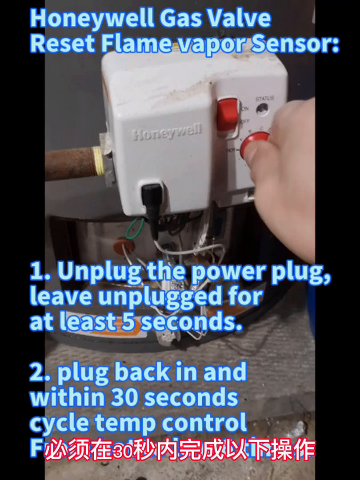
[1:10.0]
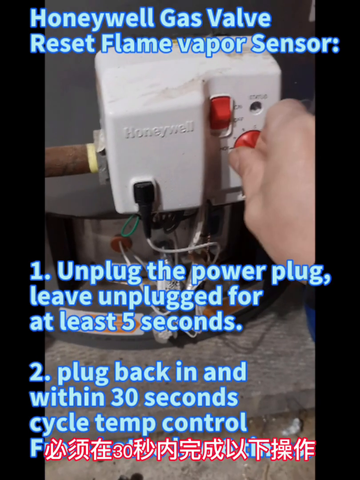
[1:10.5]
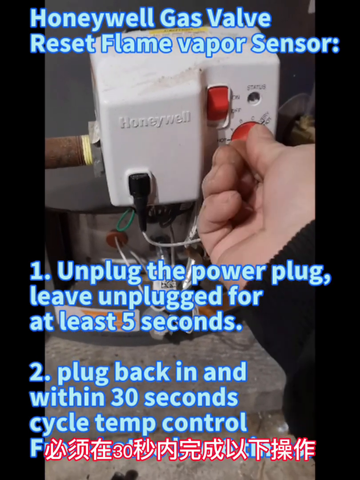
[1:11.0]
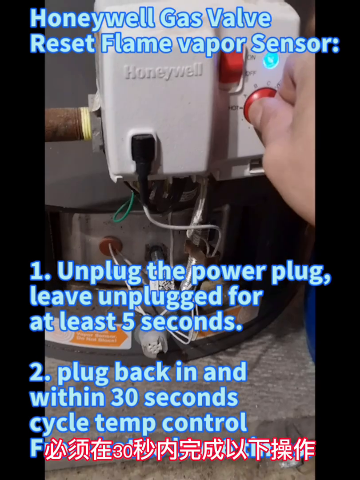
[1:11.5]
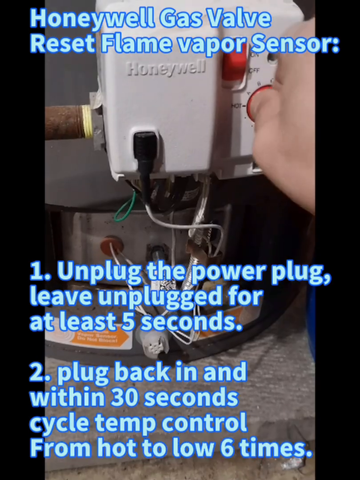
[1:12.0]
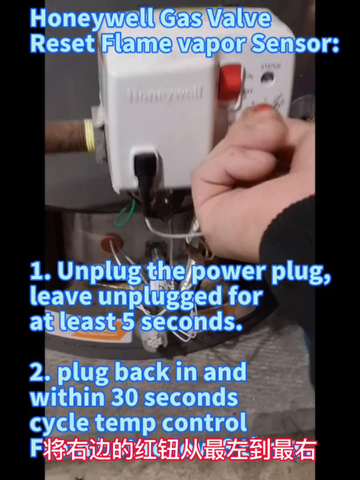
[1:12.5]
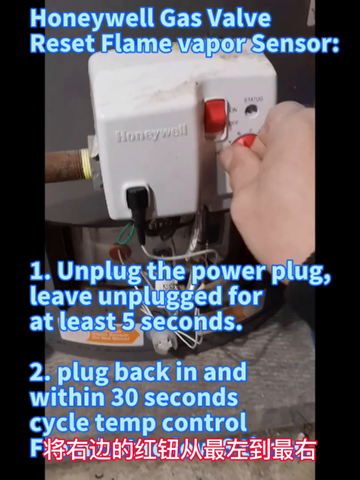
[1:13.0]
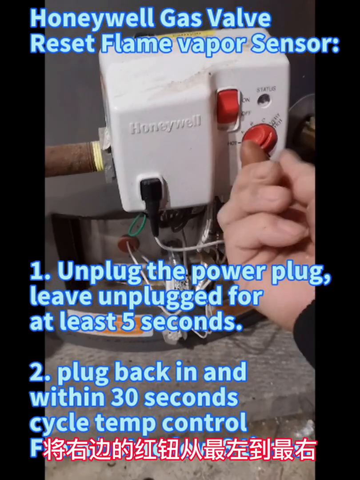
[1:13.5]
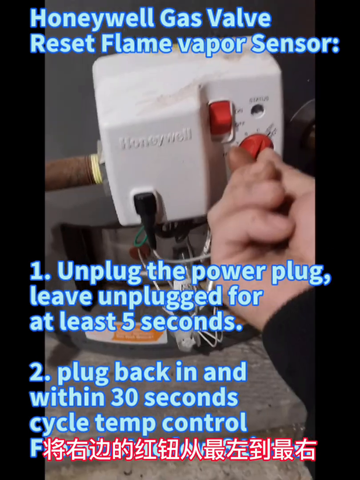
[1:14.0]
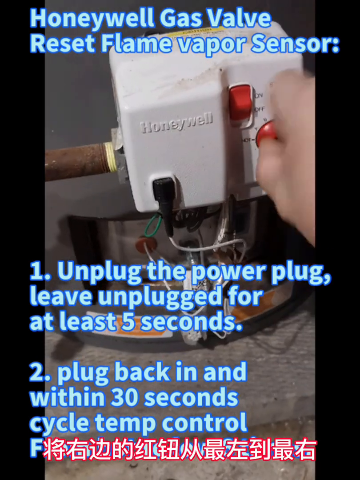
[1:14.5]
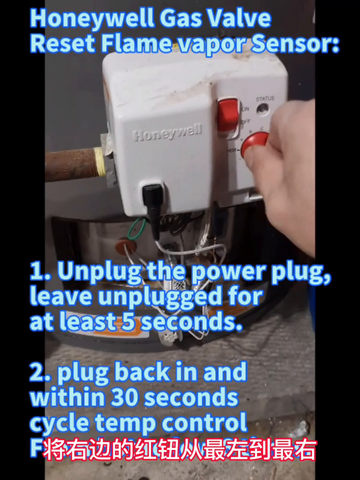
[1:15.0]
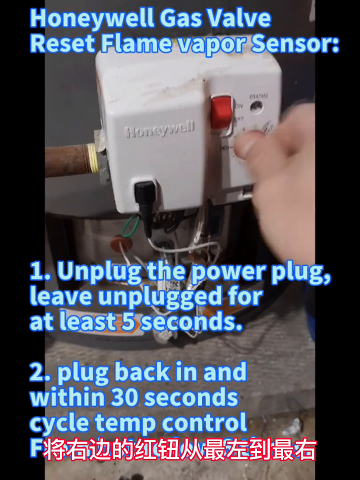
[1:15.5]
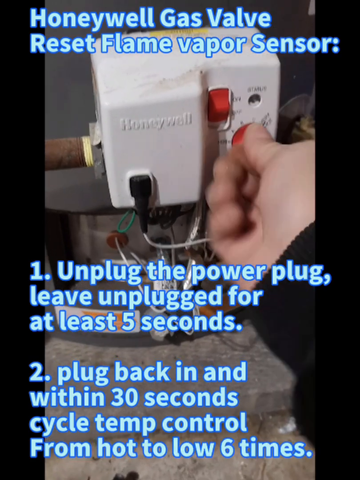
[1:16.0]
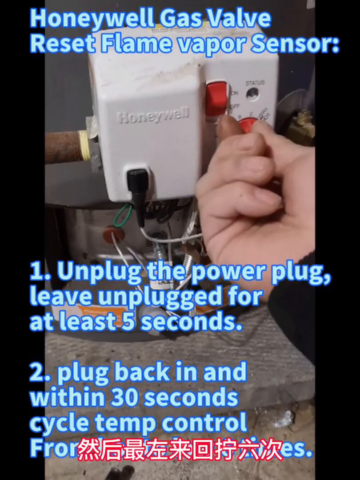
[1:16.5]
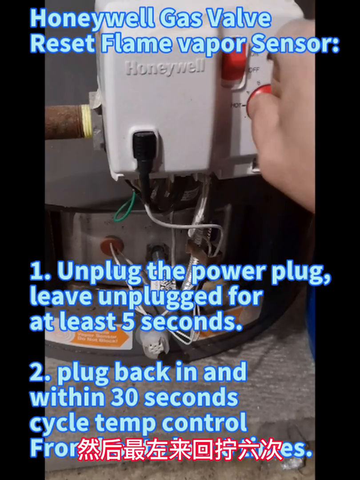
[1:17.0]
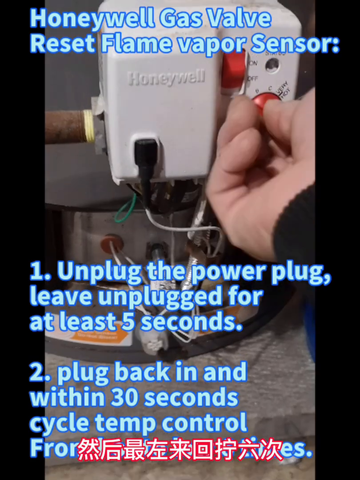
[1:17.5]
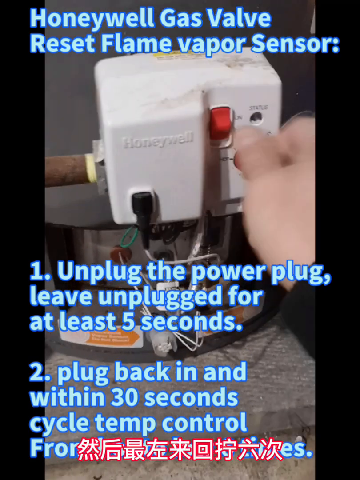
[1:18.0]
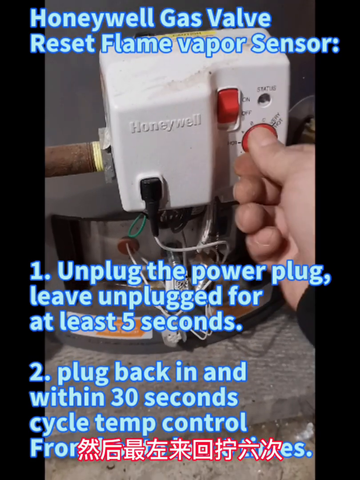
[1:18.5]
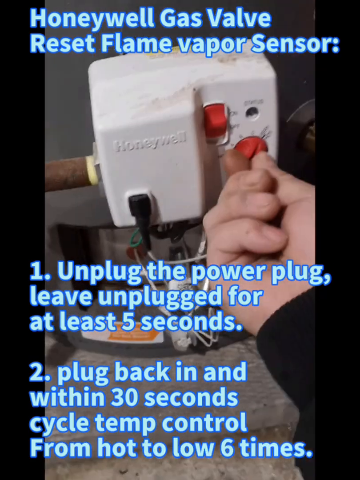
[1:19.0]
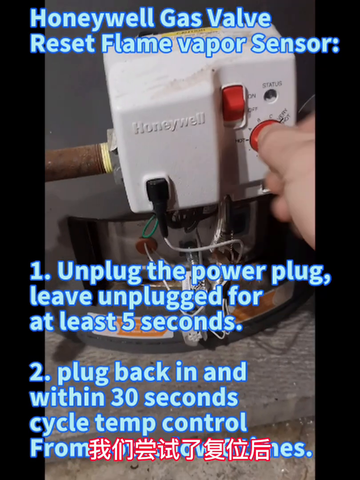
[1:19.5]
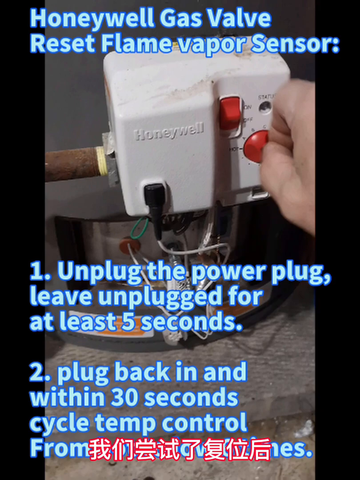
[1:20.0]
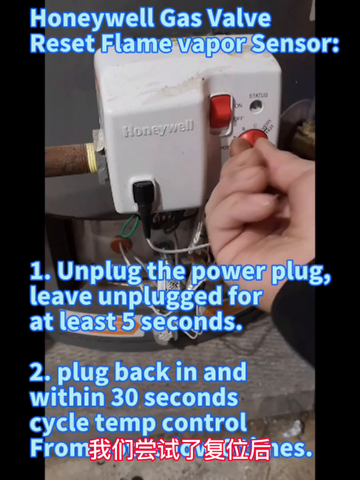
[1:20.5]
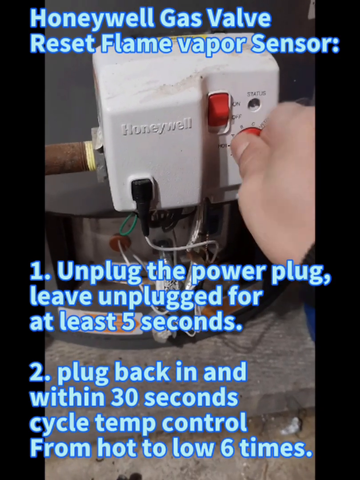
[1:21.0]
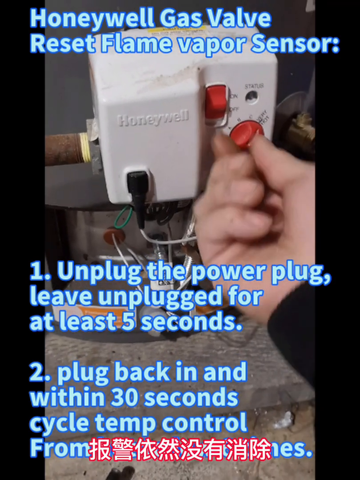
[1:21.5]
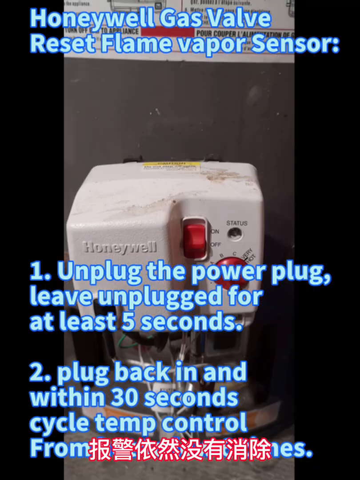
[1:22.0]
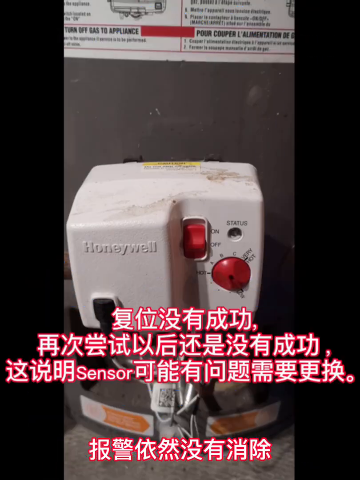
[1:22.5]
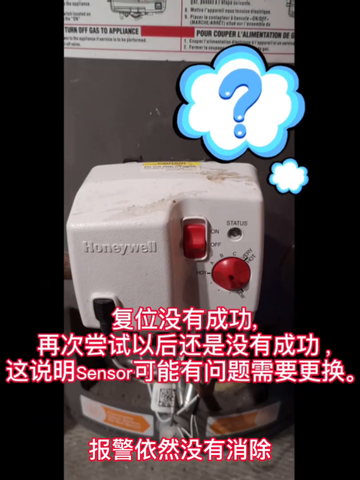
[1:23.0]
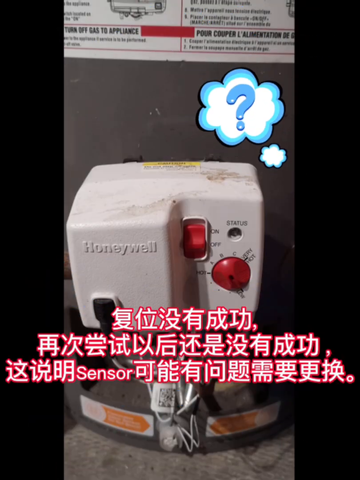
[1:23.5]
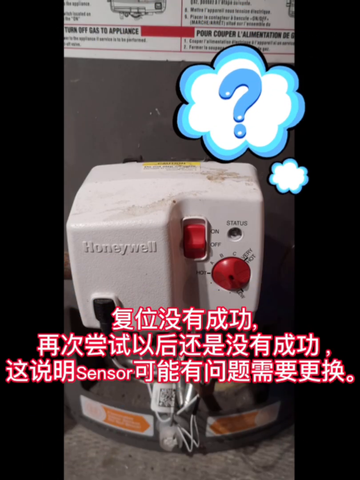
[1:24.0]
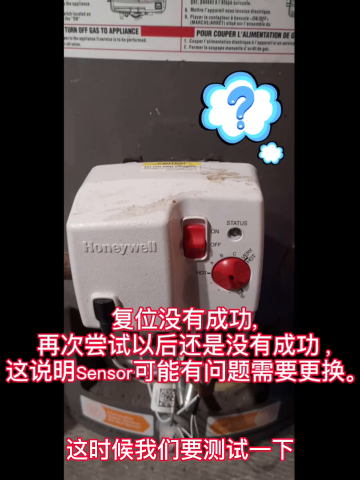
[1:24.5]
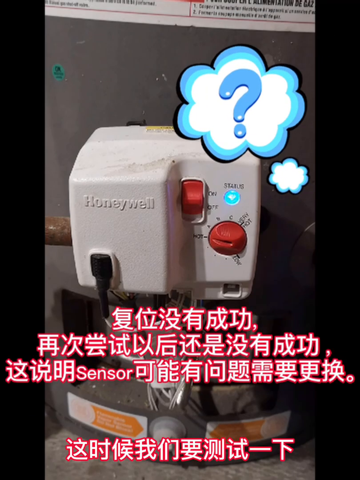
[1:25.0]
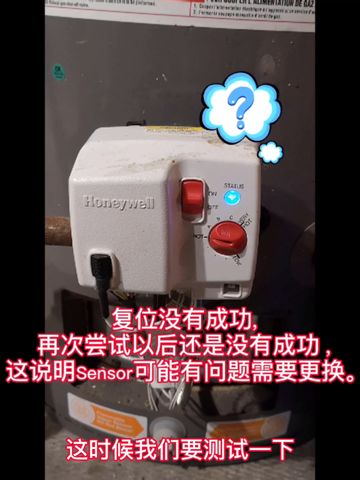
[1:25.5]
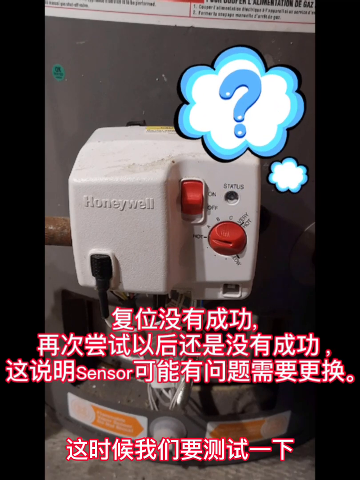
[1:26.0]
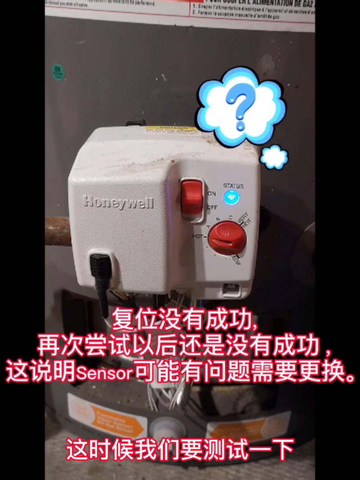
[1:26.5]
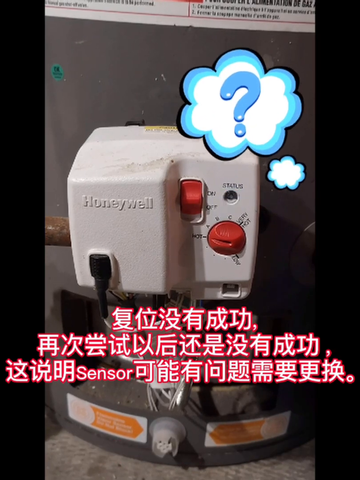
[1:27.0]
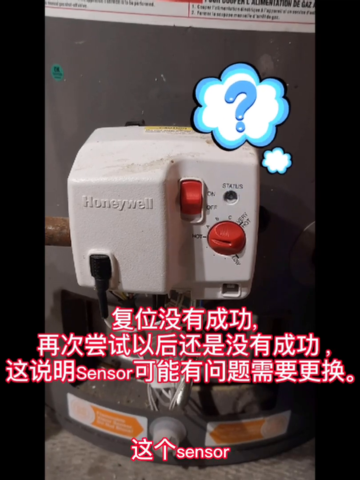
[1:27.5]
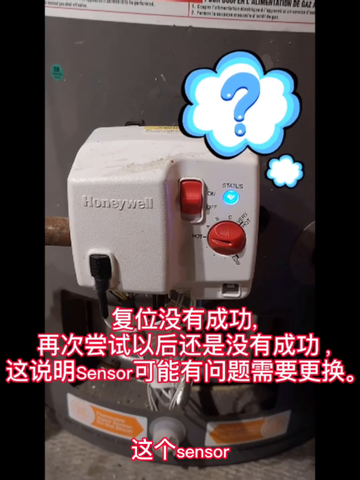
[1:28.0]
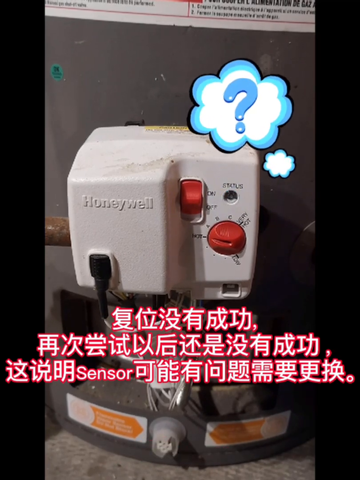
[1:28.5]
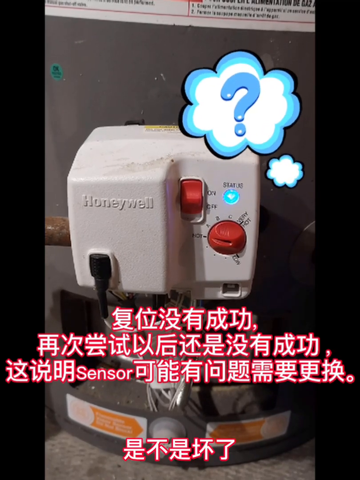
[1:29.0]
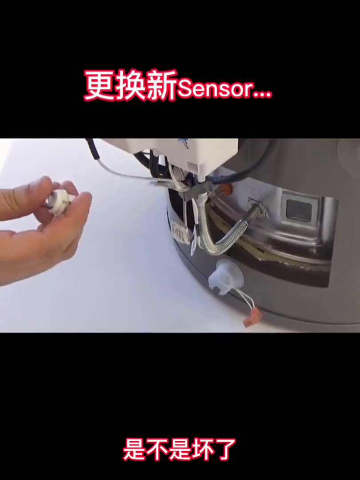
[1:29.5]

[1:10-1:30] The cycling of the temp control continues: the knob is turned back and forth six times, apparently to reset the flame vapor sensor. The video shows the completion of that step.